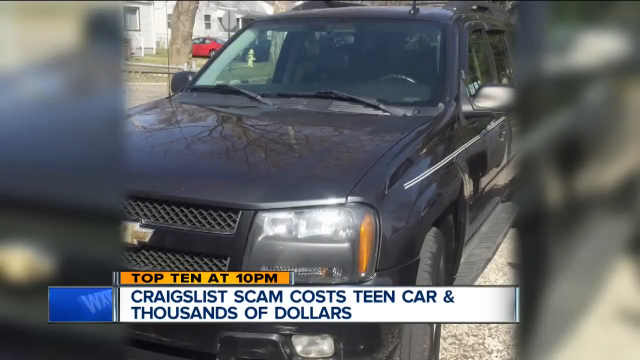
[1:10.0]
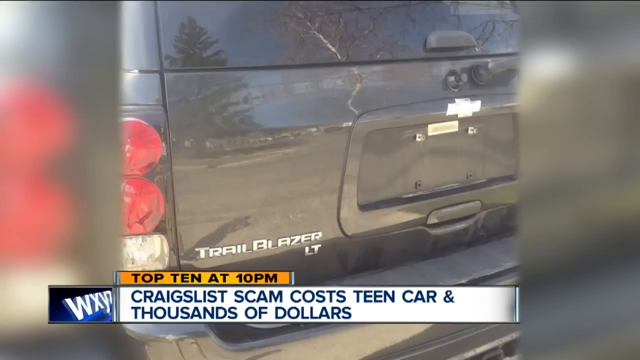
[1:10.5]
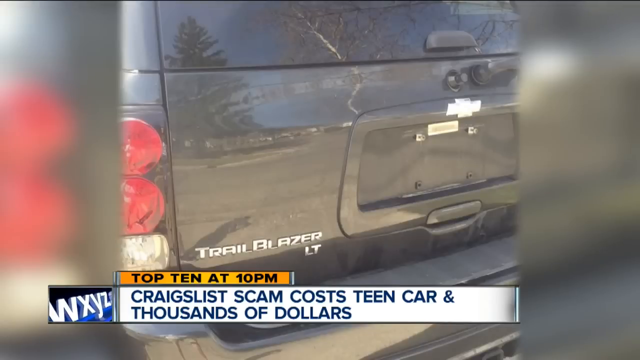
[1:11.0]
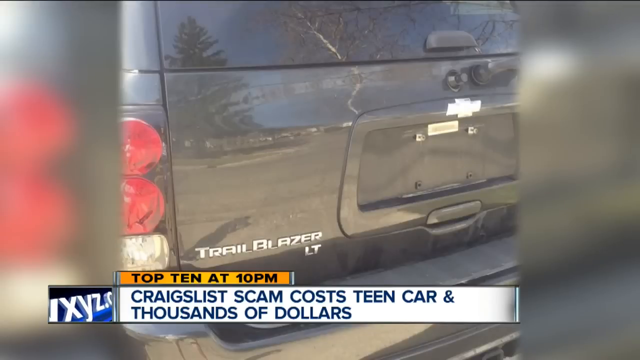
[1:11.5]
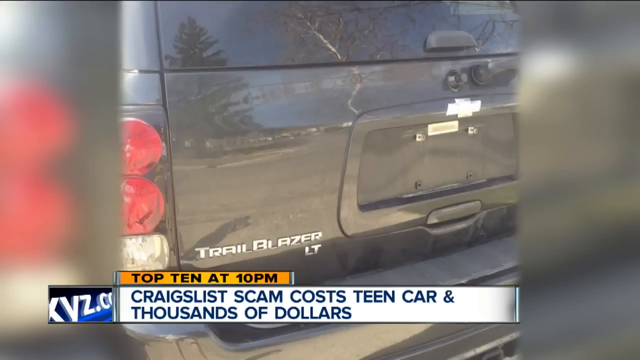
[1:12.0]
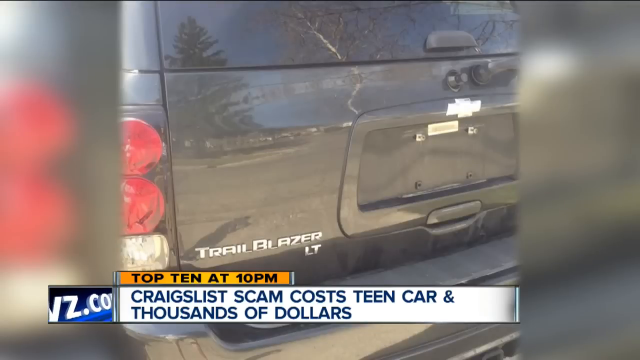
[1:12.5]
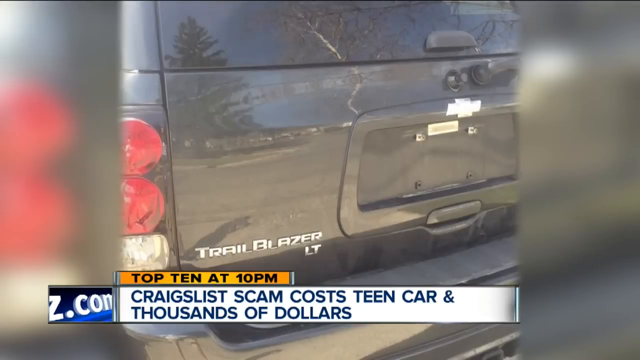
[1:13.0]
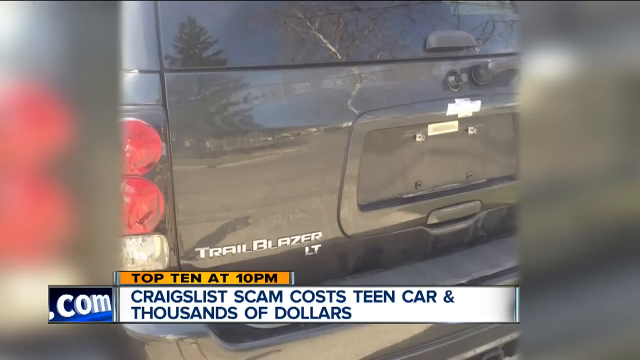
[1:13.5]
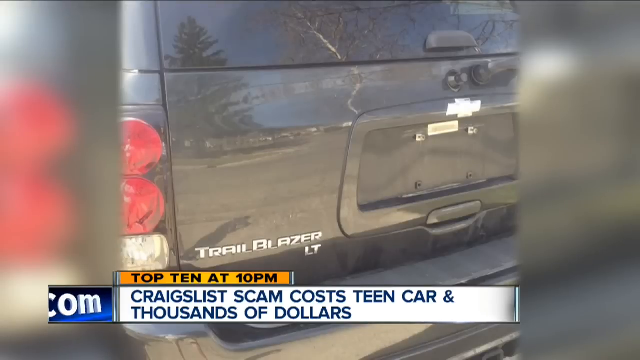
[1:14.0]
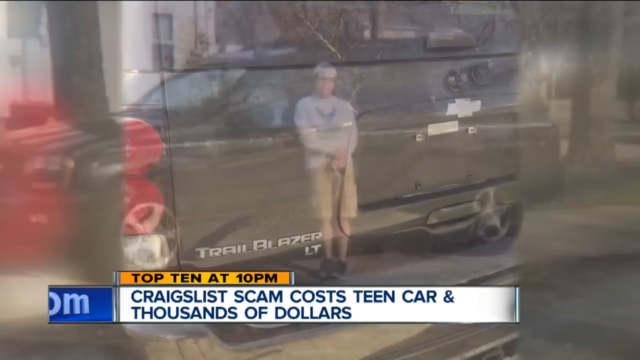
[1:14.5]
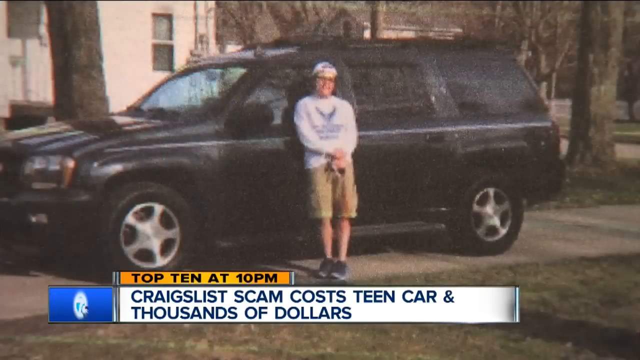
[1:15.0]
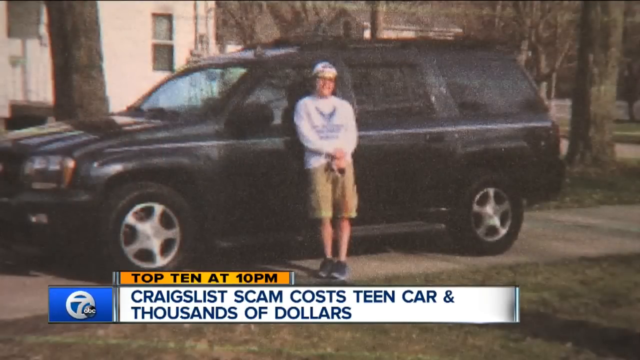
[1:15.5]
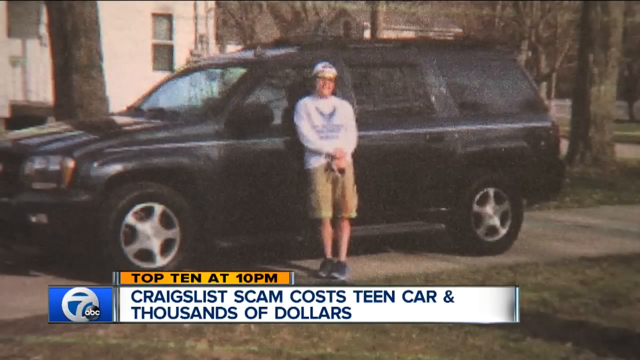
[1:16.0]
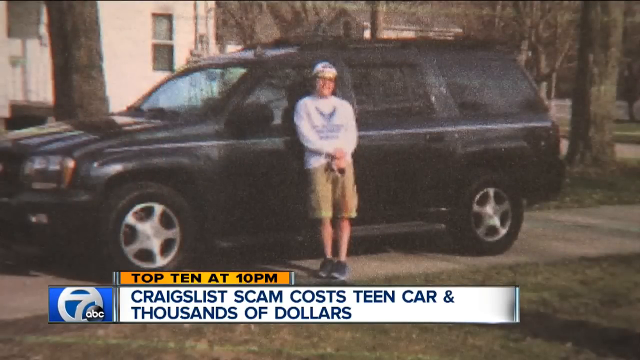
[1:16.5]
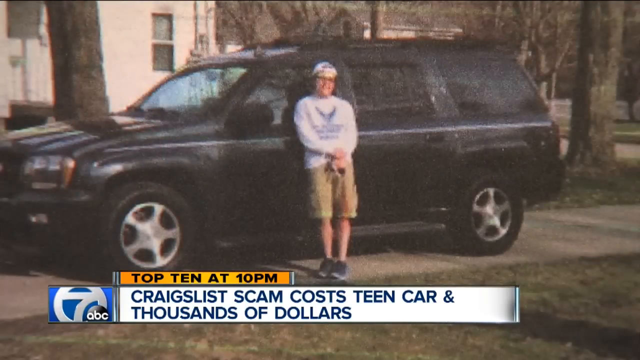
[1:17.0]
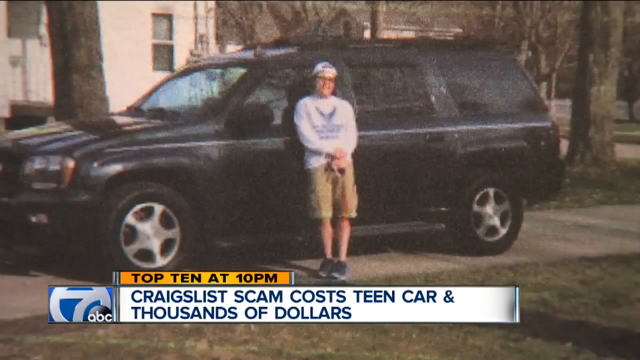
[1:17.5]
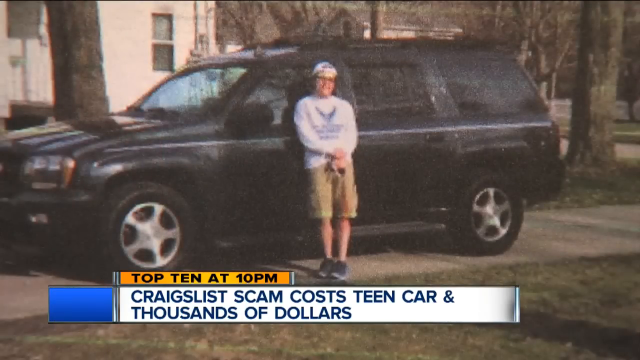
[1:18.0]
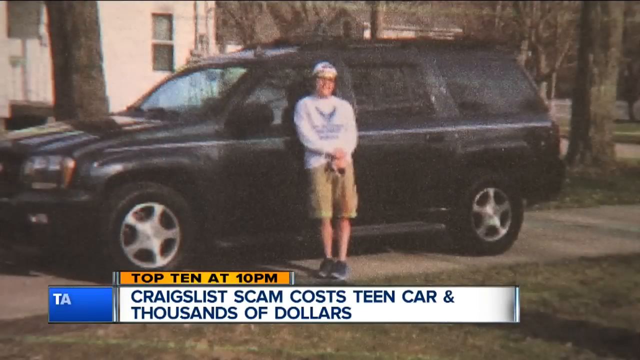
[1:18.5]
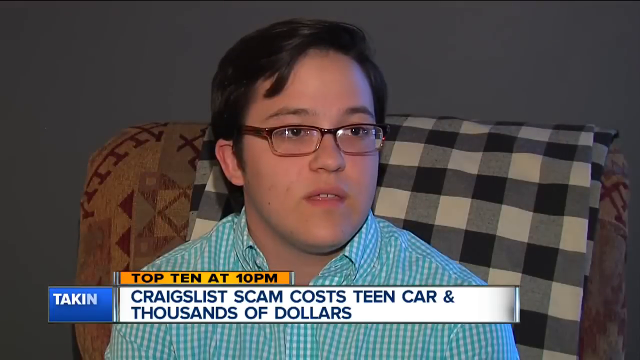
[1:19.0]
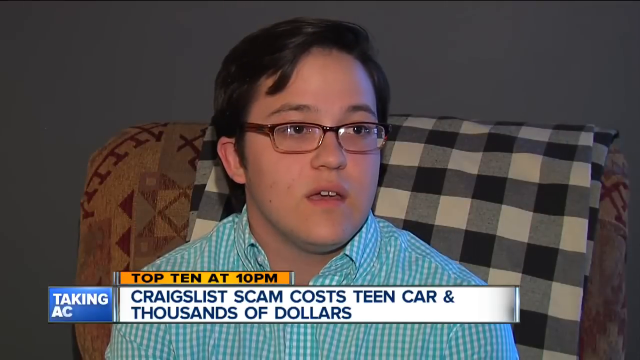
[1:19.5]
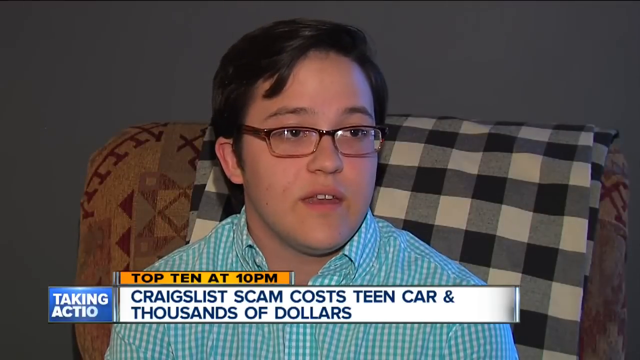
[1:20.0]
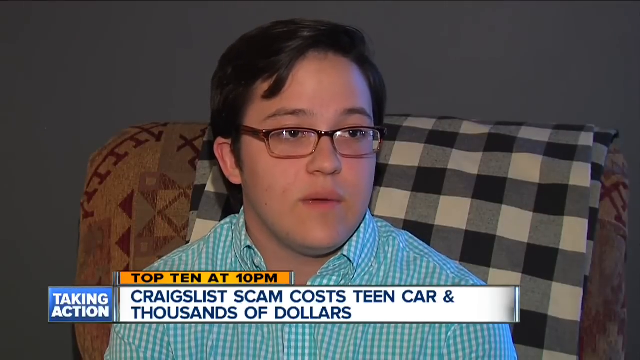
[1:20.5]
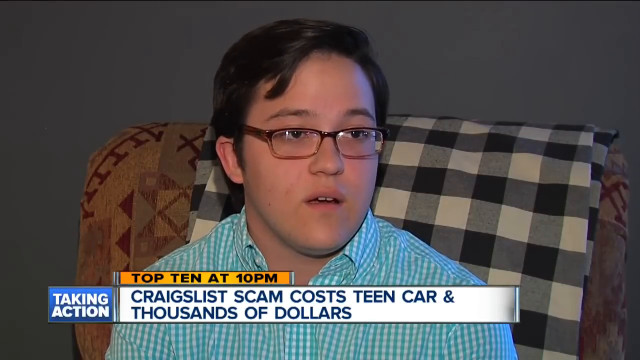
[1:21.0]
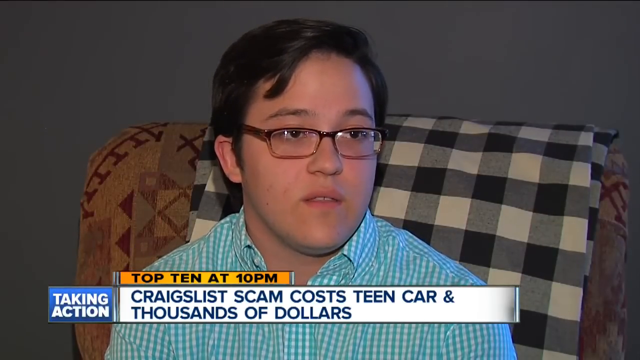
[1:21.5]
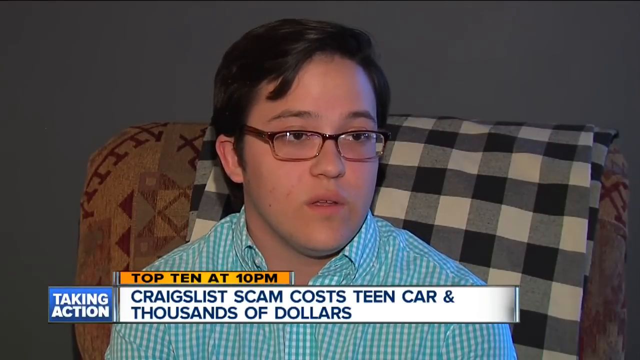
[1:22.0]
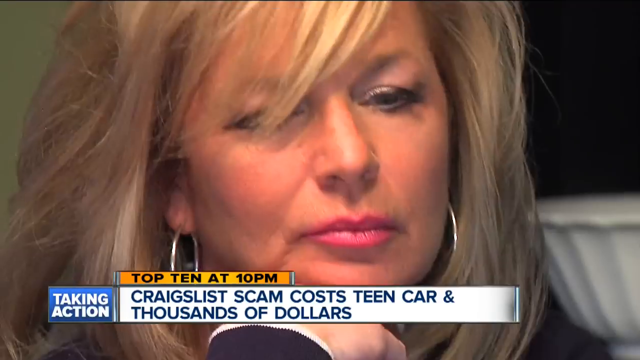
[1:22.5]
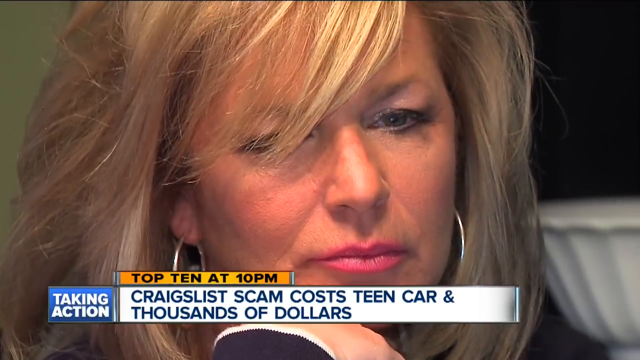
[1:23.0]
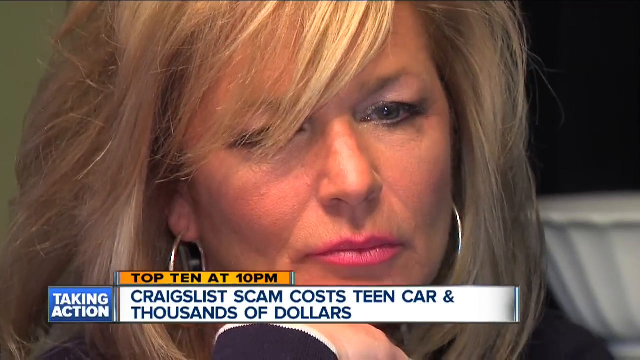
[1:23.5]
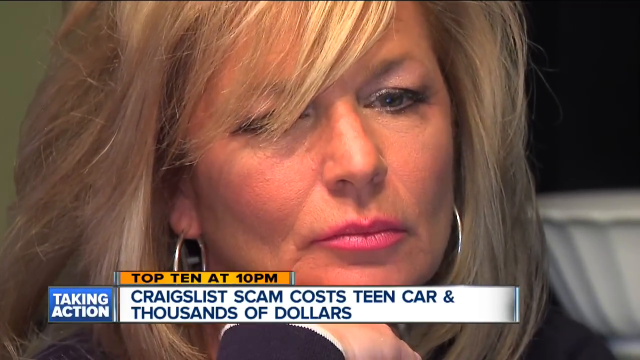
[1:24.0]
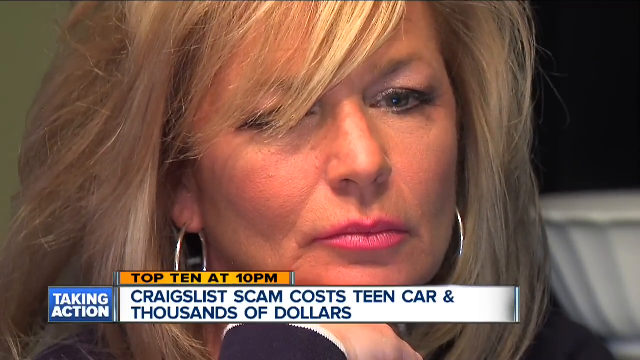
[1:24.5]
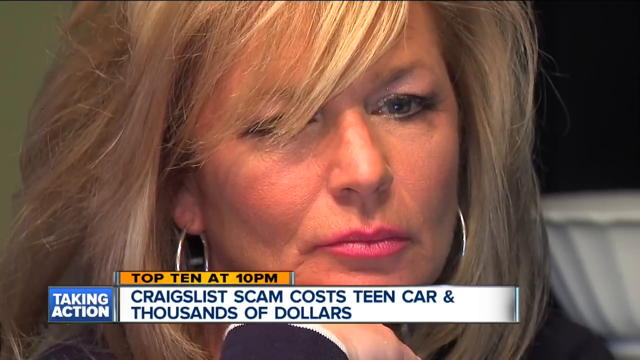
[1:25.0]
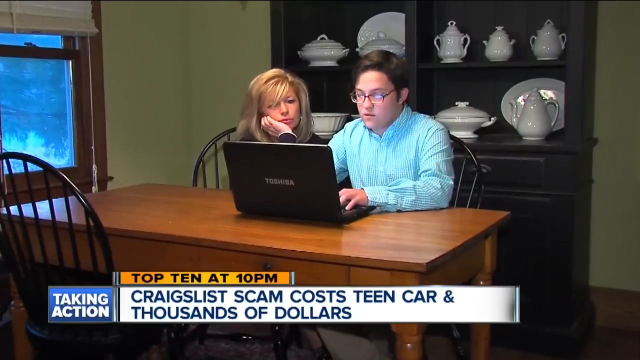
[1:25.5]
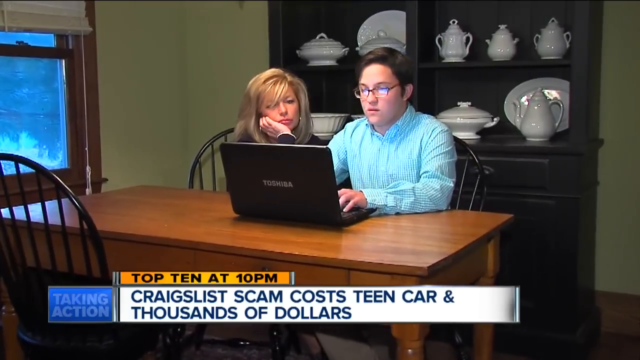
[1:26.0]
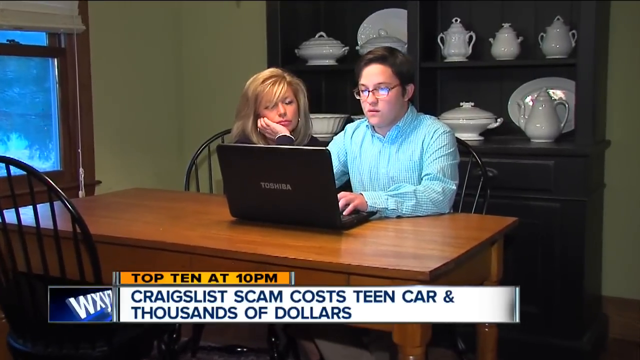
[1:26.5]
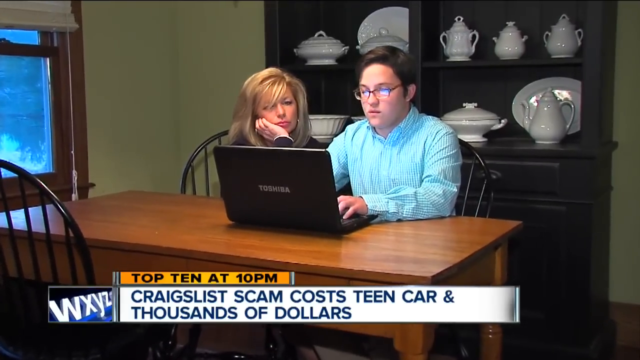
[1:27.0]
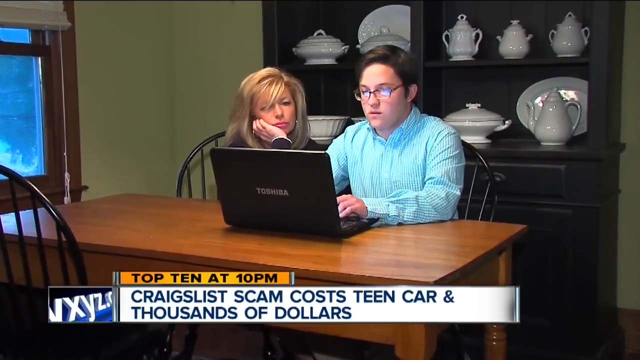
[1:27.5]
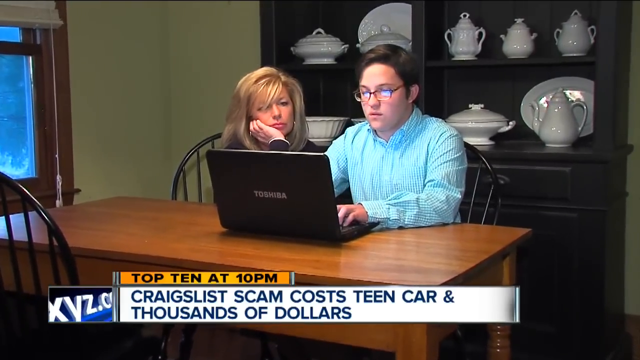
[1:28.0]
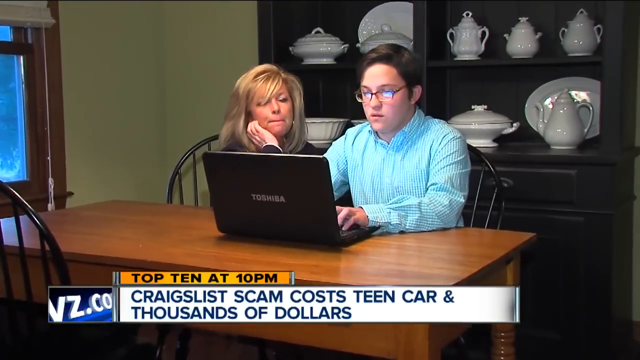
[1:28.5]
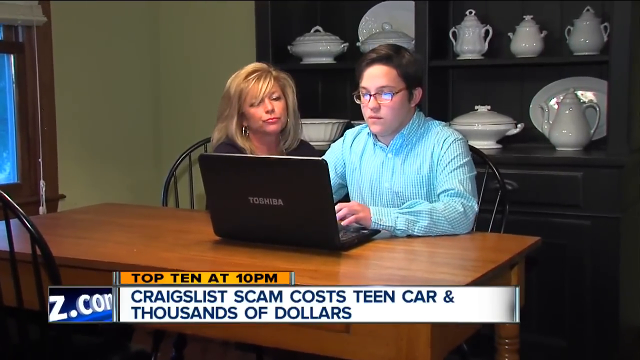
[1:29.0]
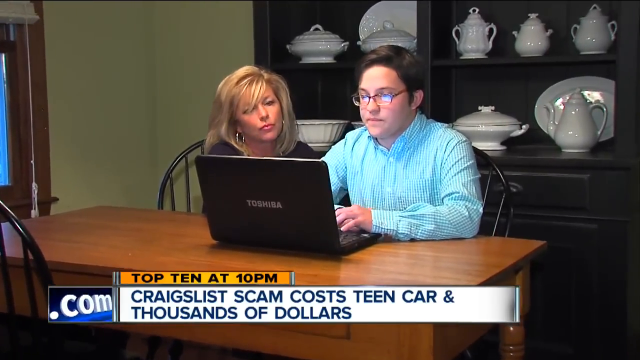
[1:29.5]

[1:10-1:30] Various images of the Trailblazer ST the teen bought are shown. A very grainy image shows the SUV, apparently parked in a driveway, with the teen standing in front of the driver's side, leaning against the car with a big smile. He wears tennis shoes, khaki cargo pants, a white long-sleeve shirt with a logo on the front, his glasses and a backward cap. The view cuts back to the teen sitting in the rocking chair, talking to the person standing next to it. A close-up shows the mom's face; she is not looking at the camera and is neither smiling nor talking. Then the two are seen at the table with a Toshiba laptop, both looking at what is on the screen.